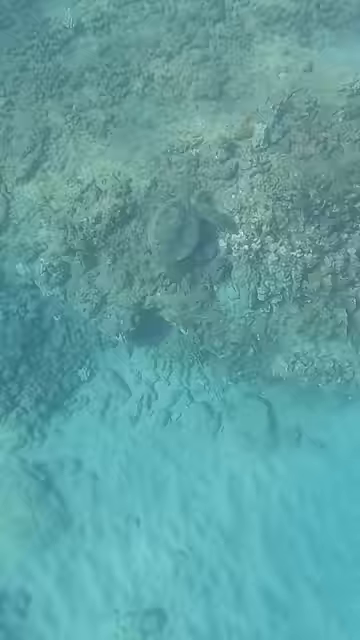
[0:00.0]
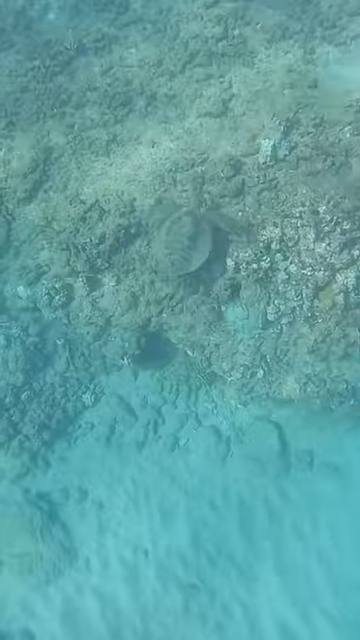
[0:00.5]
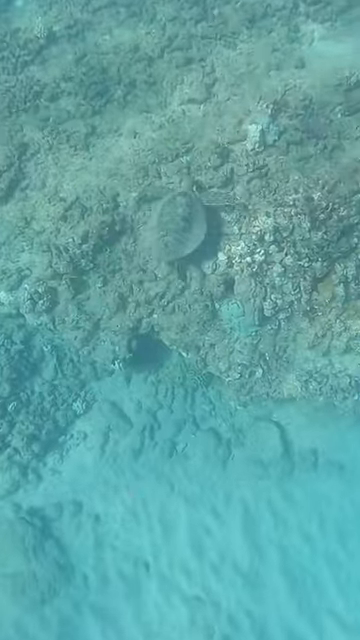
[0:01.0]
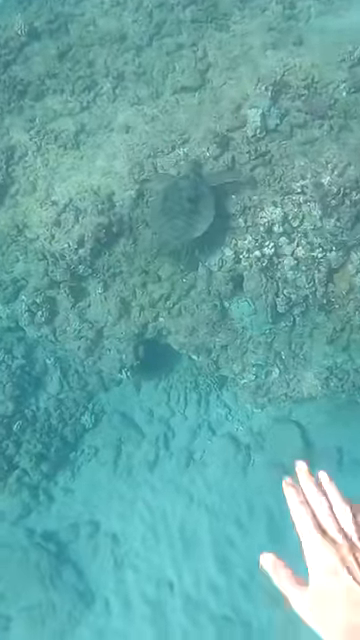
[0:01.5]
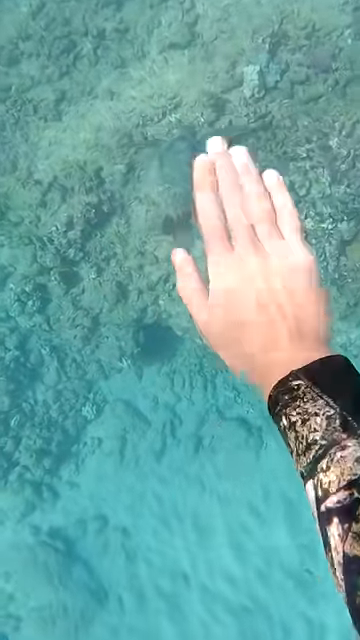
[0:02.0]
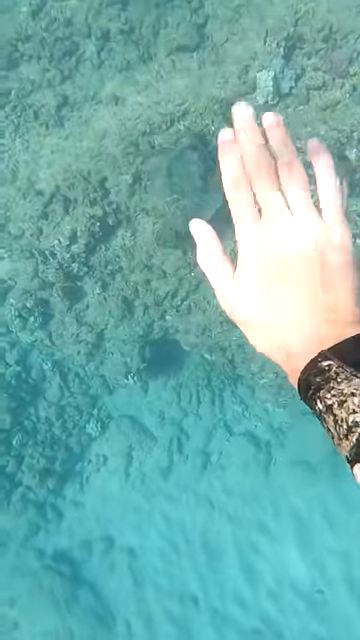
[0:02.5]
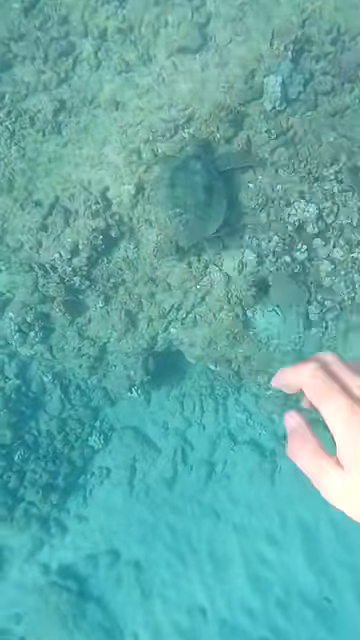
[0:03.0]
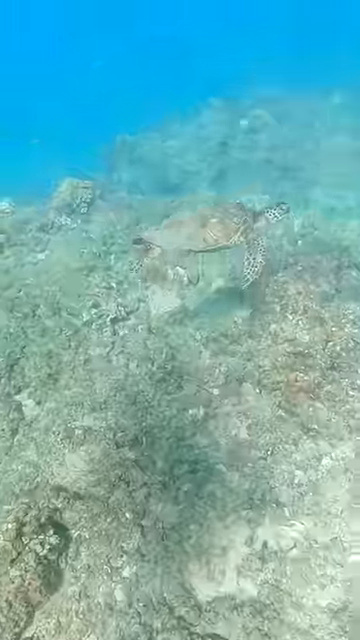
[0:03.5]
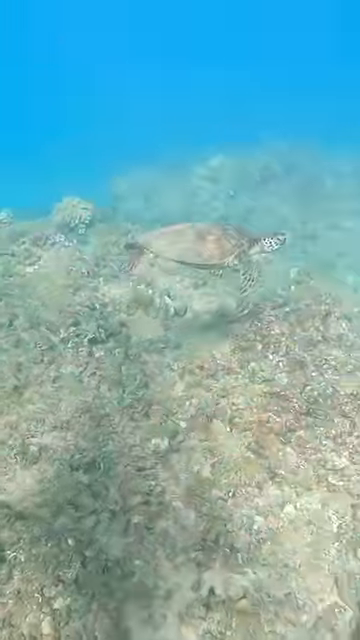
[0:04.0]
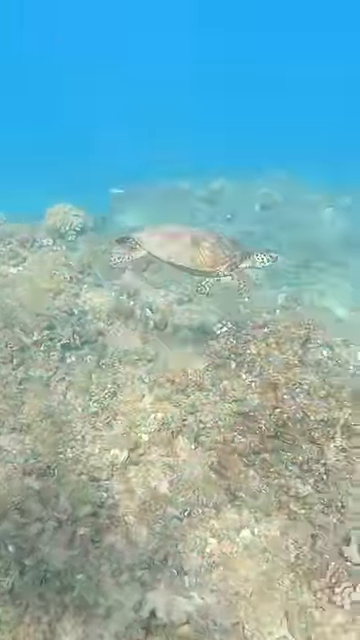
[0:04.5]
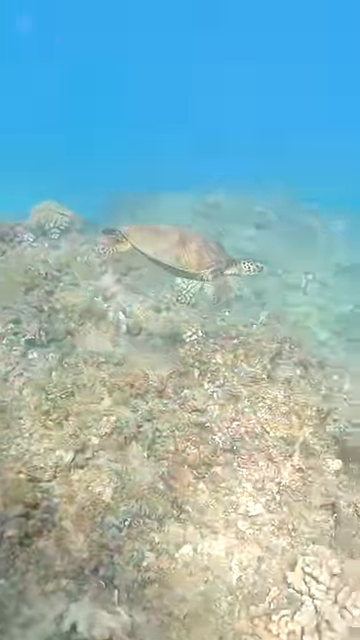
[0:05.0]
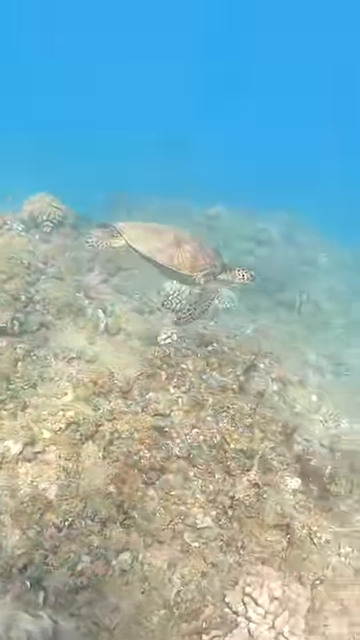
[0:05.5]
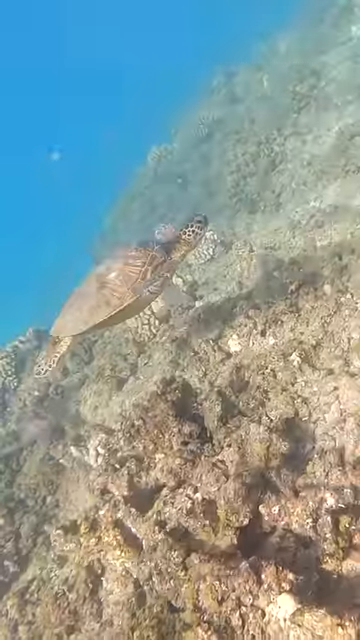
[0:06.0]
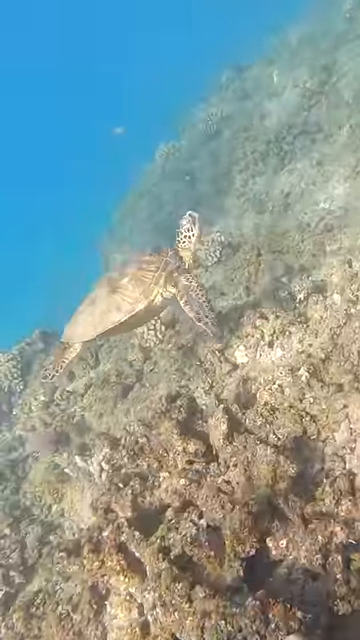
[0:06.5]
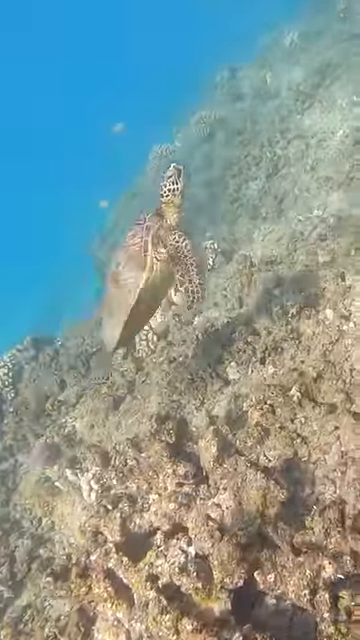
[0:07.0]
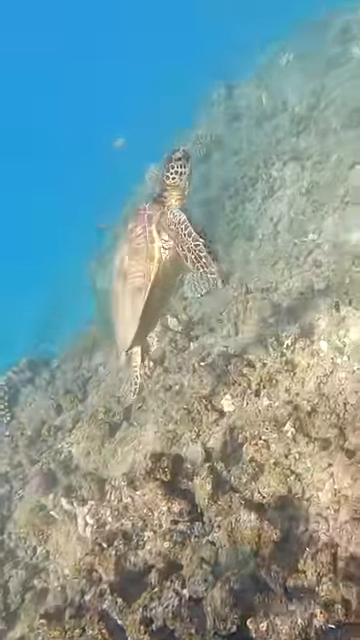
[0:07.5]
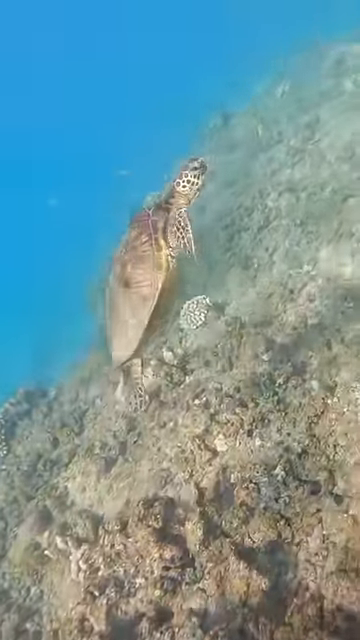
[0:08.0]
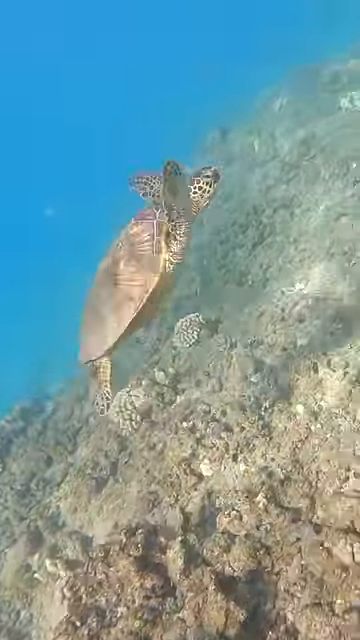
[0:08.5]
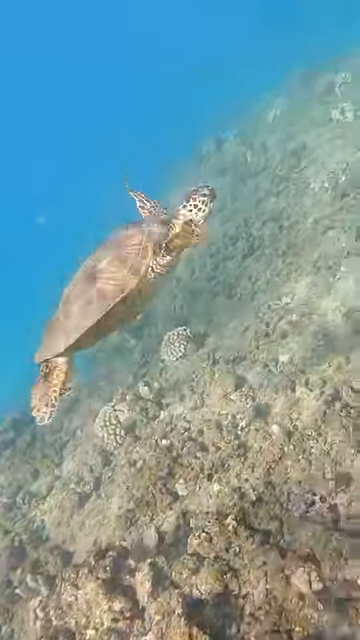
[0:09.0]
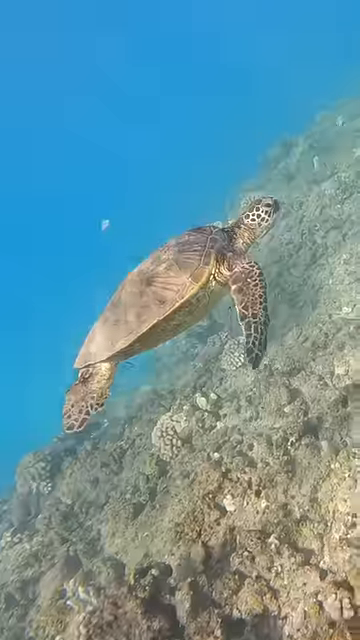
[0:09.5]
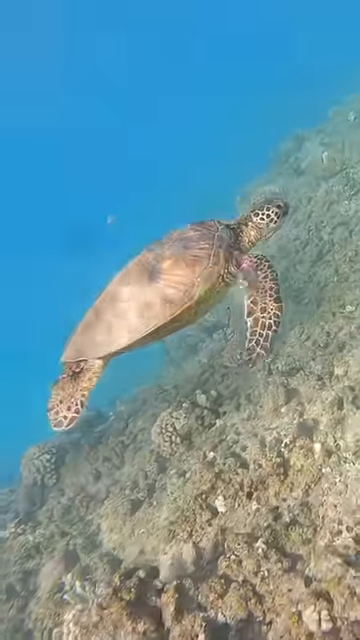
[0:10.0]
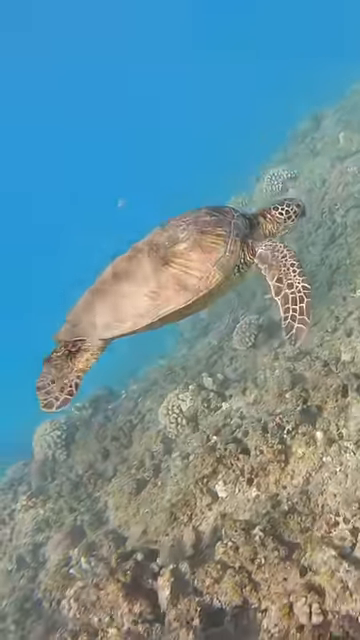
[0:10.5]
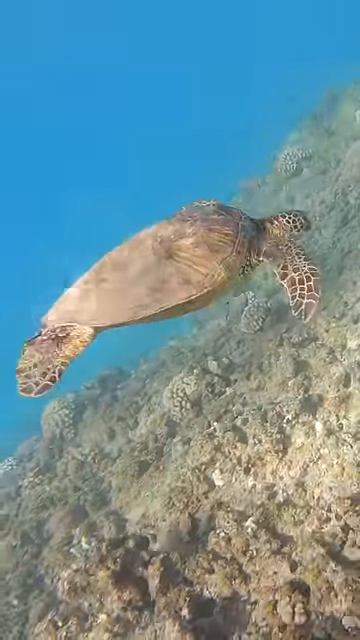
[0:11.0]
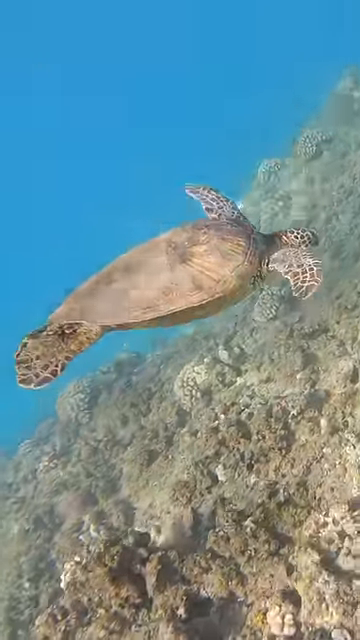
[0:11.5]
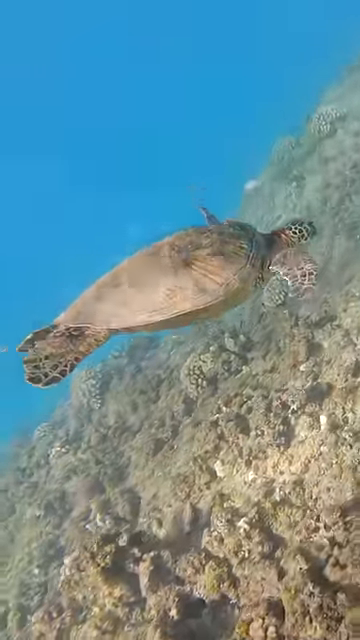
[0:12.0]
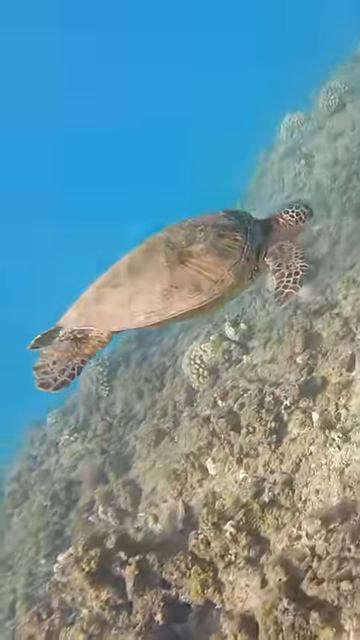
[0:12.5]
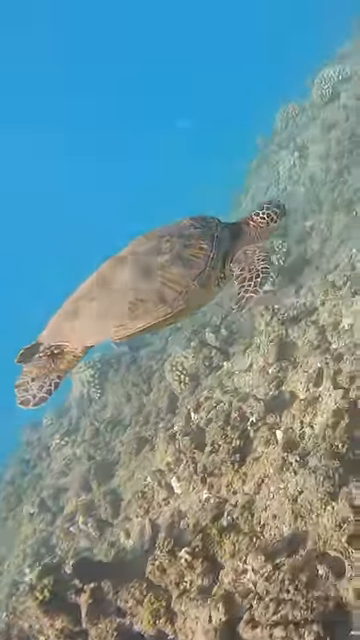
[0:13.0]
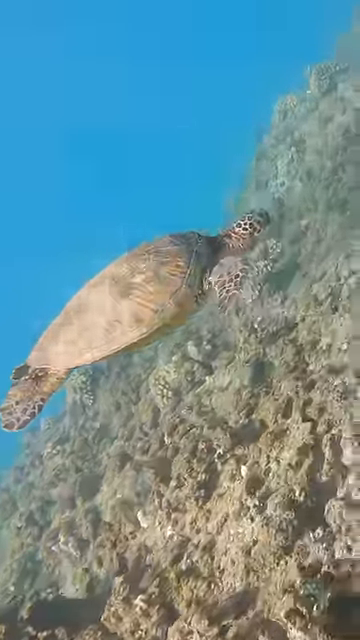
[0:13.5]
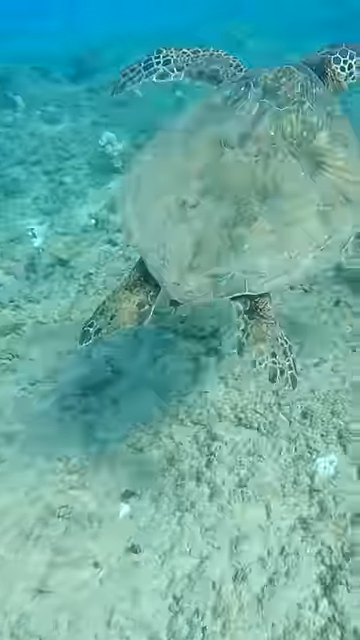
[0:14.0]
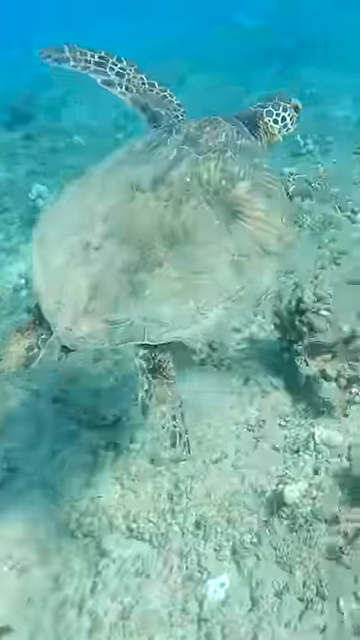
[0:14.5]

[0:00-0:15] Underwater footage appears to be filmed by someone snorkeling beneath the surface of an ocean, where the water is very clear and blue. A sea turtle appears to be swimming along the bottom of the ocean floor. The person filming appears to follow the turtle, tracking its swimming patterns and its course along the ocean floor. The turtle uses its front fins as well as its rear legs to swim through the water. The person filming attempts to interact with the animal as it moves through the water.